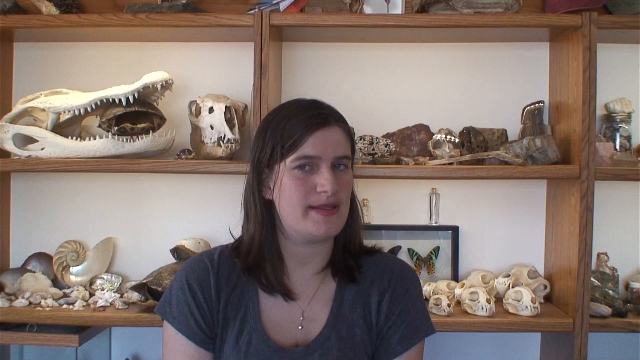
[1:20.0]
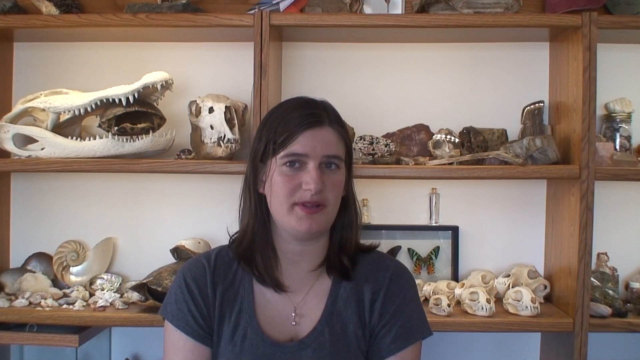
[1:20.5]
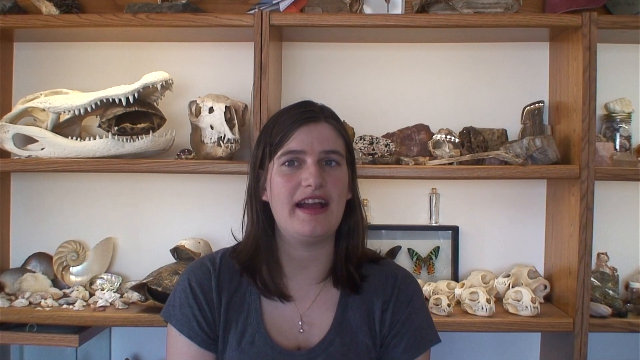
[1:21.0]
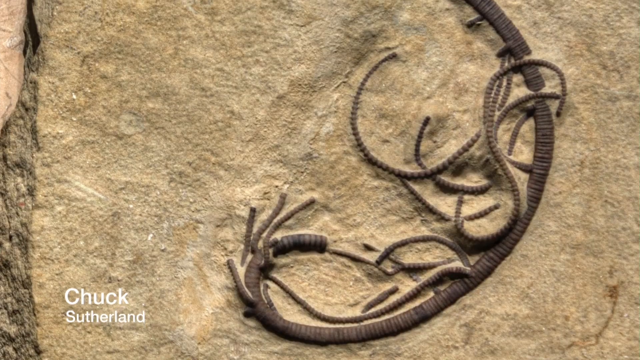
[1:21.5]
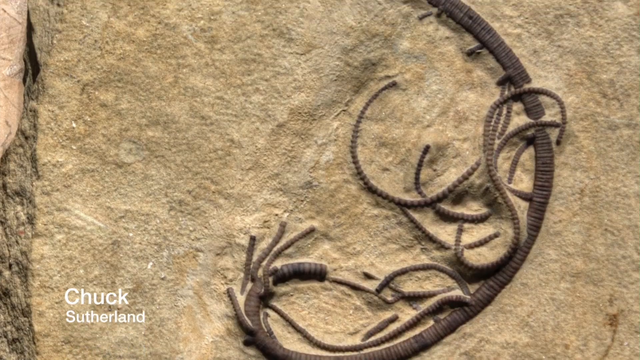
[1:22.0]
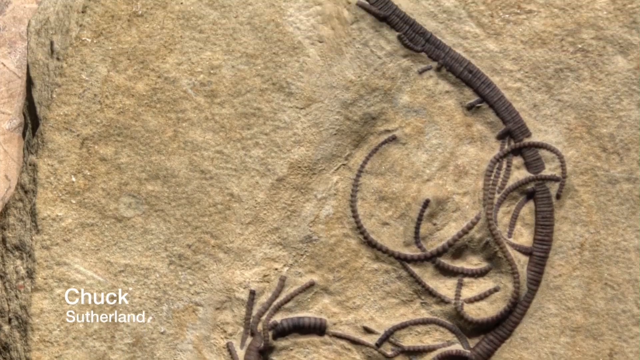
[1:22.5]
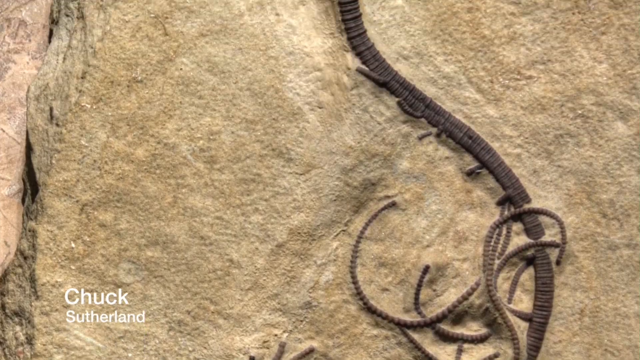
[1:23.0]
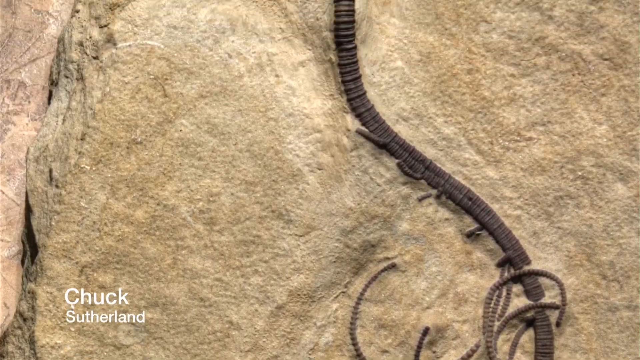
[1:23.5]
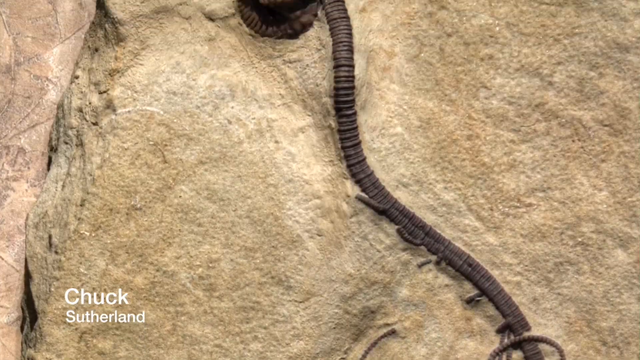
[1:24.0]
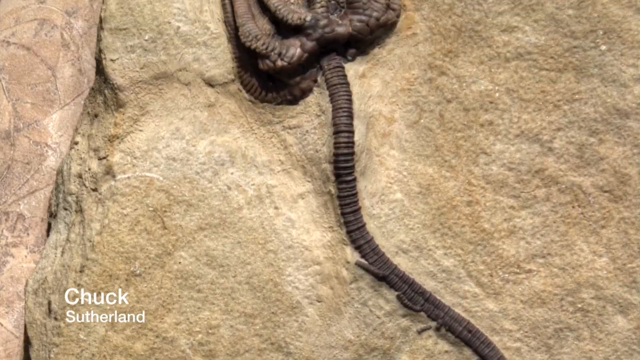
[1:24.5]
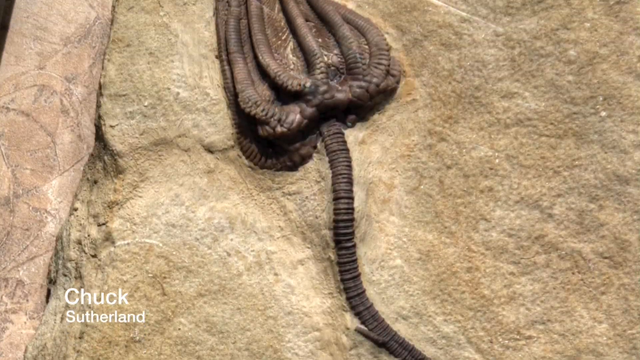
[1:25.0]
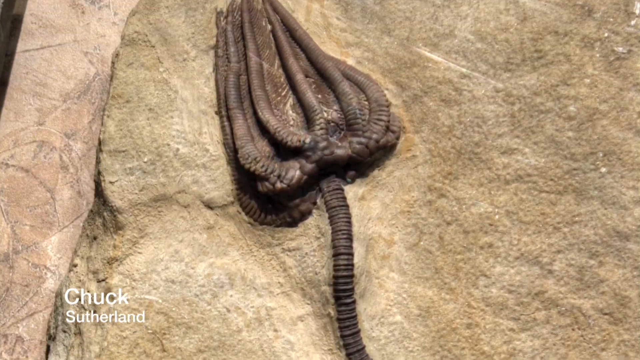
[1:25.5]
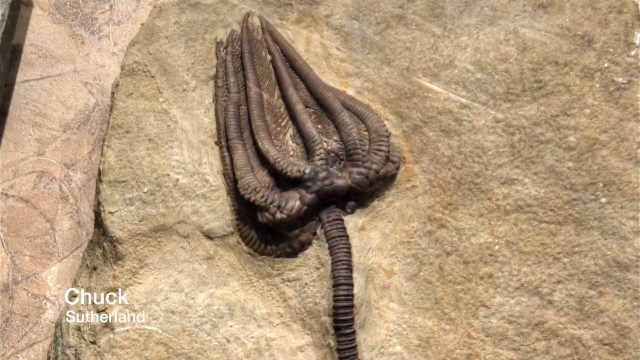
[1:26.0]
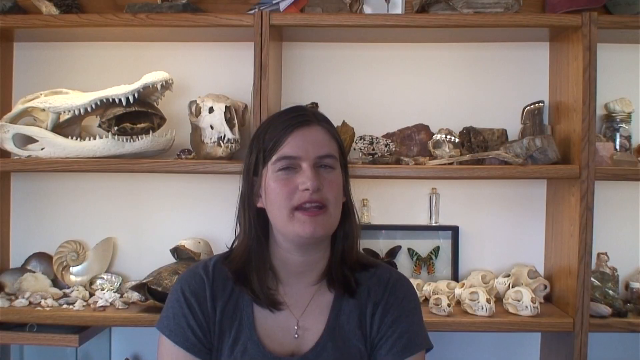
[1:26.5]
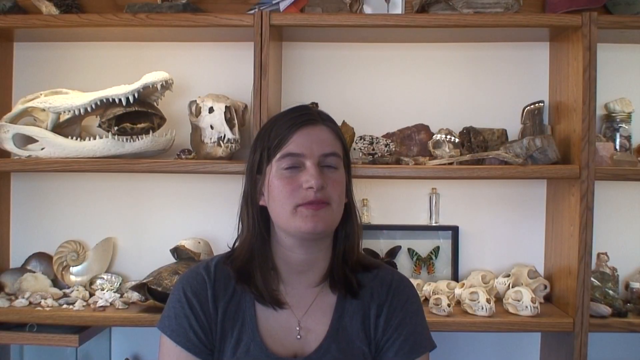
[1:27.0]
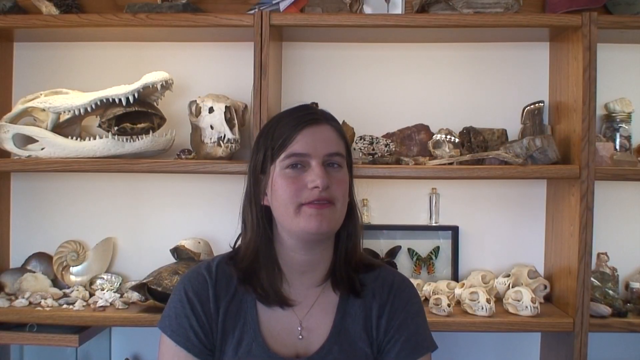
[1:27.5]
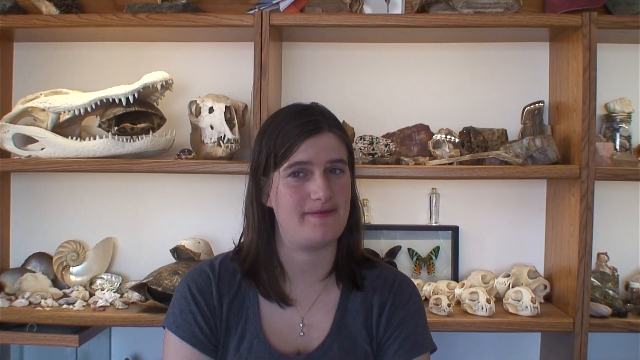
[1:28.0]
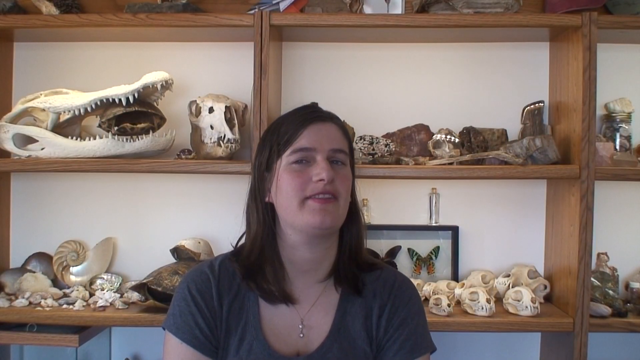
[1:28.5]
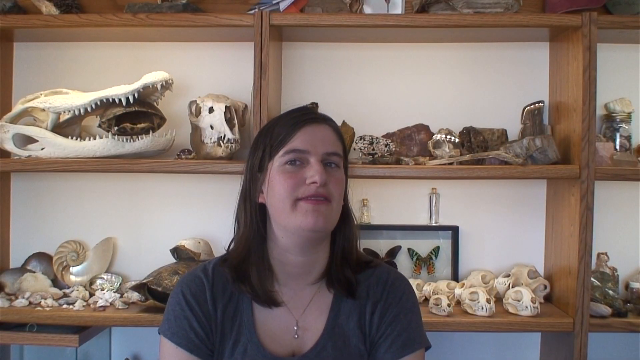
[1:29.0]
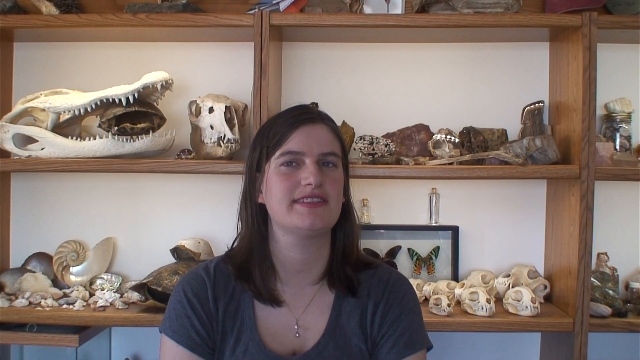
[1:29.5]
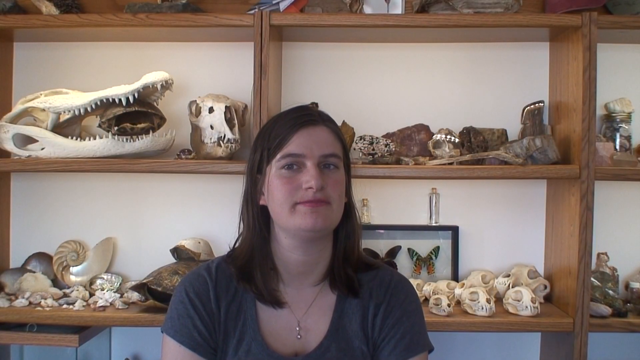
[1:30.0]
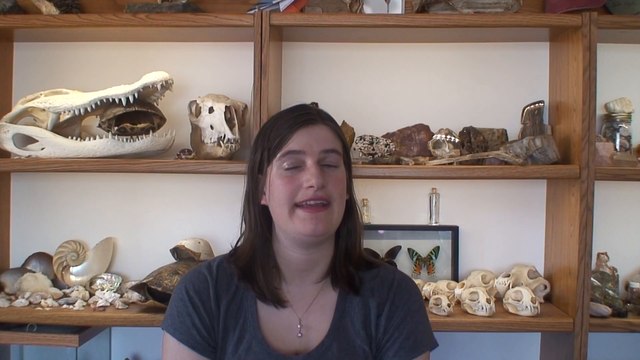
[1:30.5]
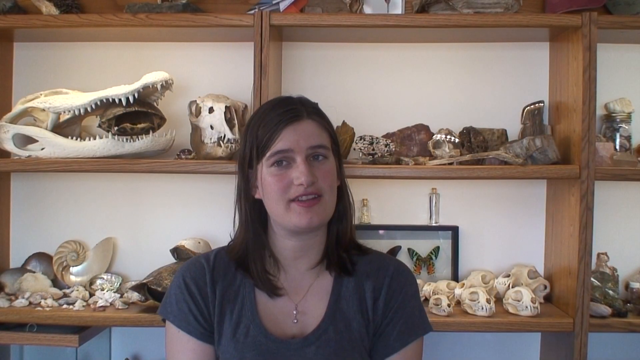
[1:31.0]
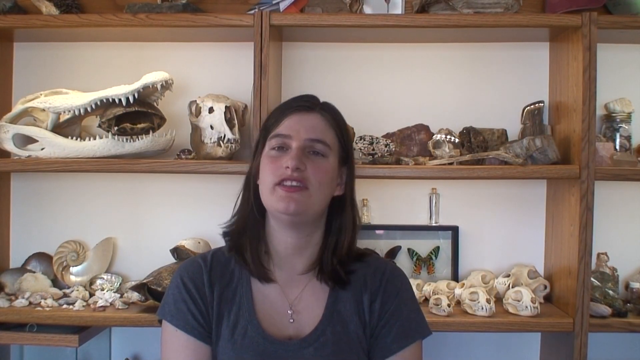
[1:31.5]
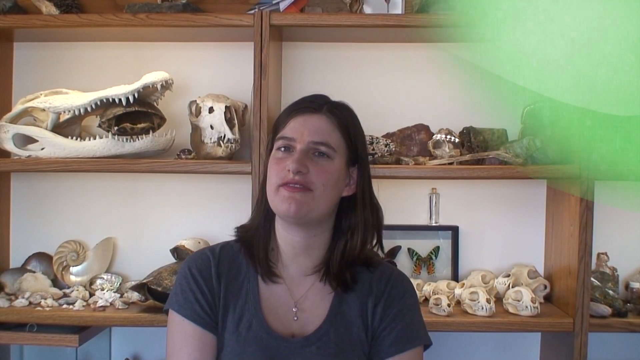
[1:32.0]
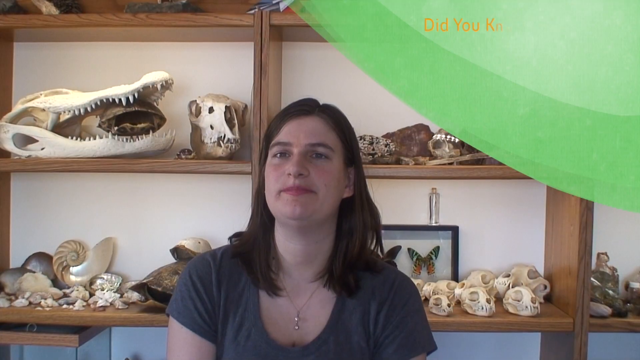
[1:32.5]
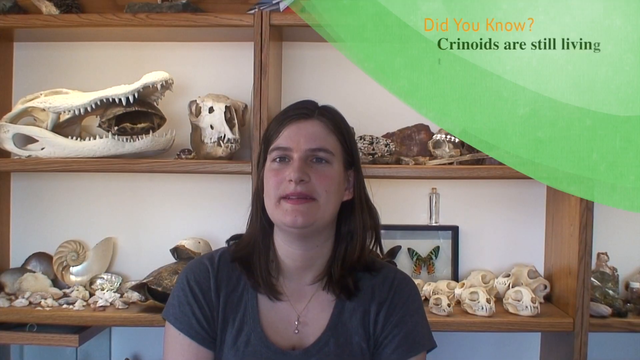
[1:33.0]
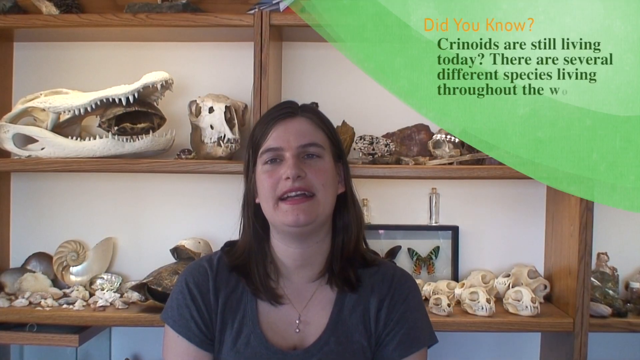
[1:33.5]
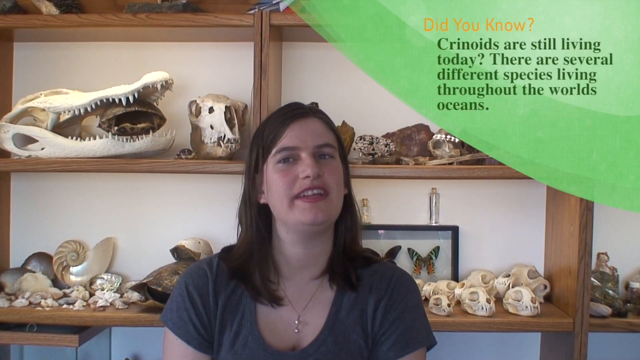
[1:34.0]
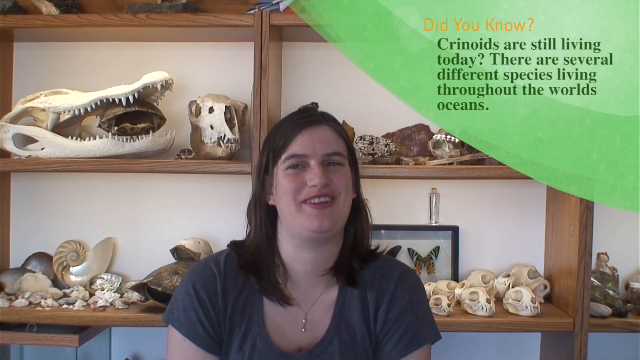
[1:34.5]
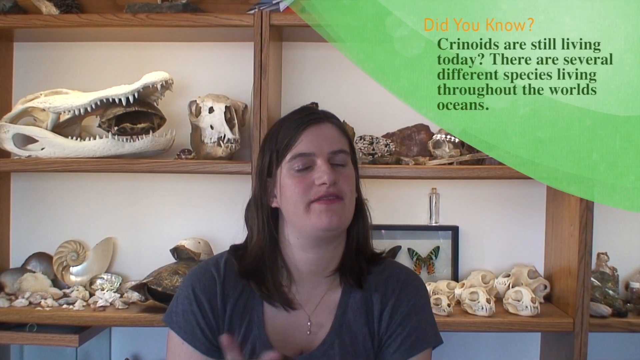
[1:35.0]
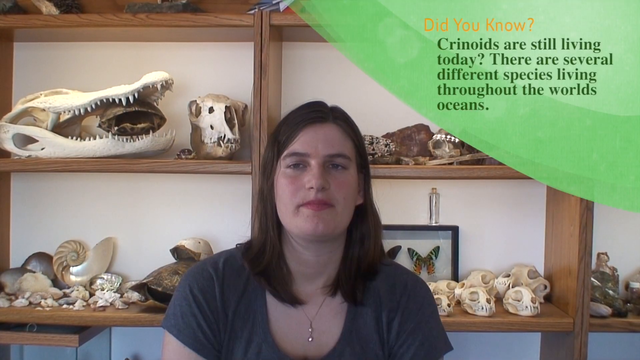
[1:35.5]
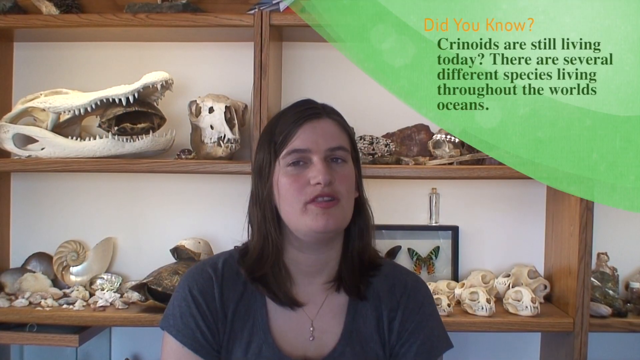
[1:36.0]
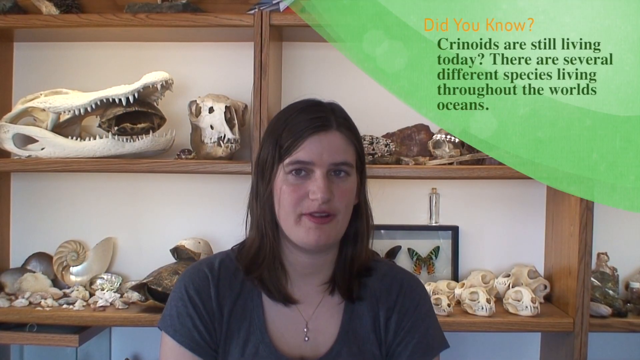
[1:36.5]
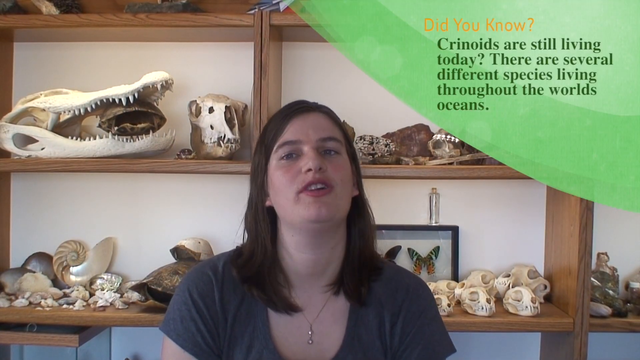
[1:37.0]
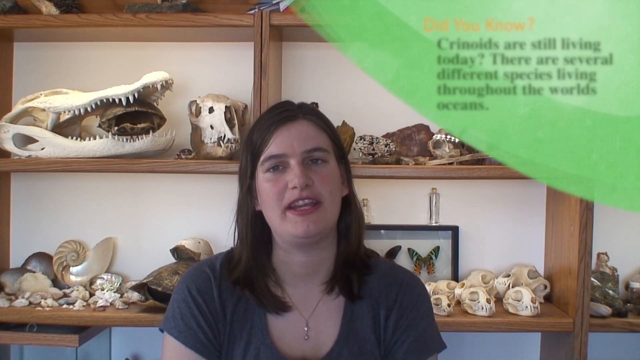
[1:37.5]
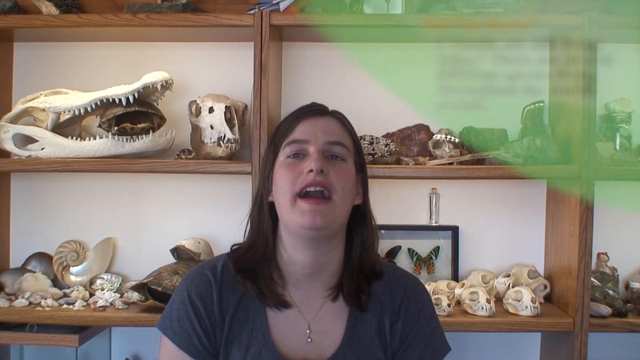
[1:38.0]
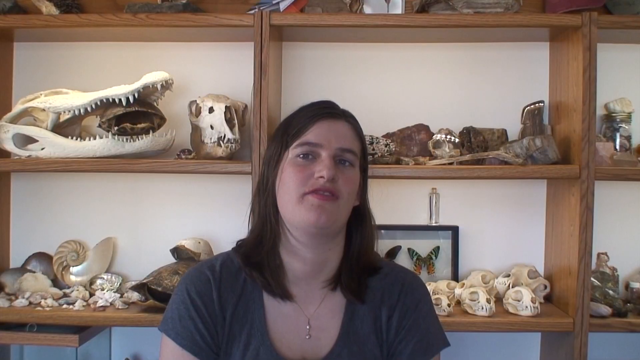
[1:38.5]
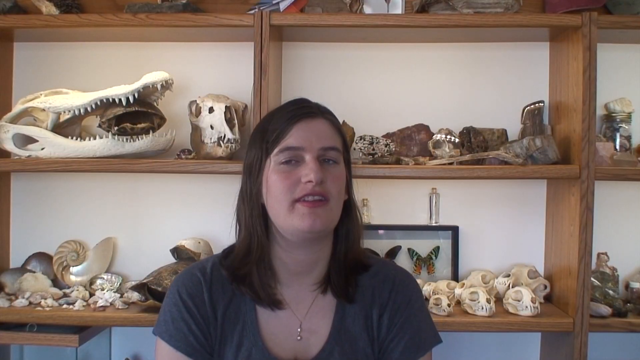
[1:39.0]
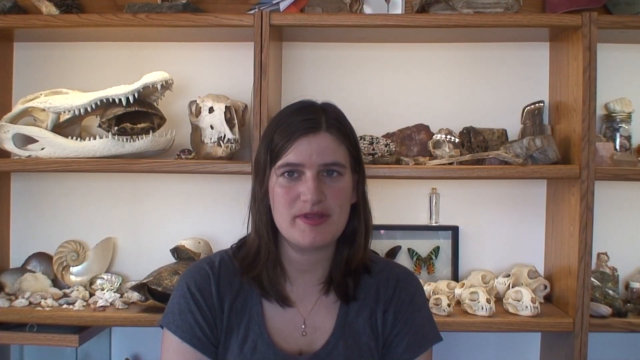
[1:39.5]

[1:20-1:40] The clump of fossils is in the center of the screen in a close-up shot; it is very large, with many pieces stuck together. Text at the bottom left reads "Ryan Soma". The scene transitions back to the woman speaking in the middle of the screen with the shelves and oddities behind her. Then another fossil appears, and the name at the bottom left changes to "Chuck Sutherland". The camera pans up to show the whole fossil, as it is quite large. The screen returns to the speaker, who continues speaking toward the audience. The upper right corner turns green with a fact that reads "Did you know? Crinoids are still living today?" The speaker continues to speak.